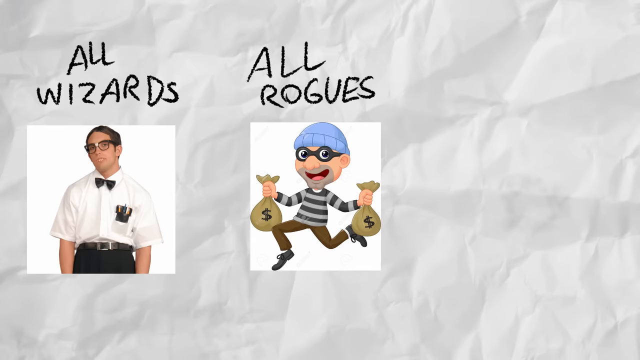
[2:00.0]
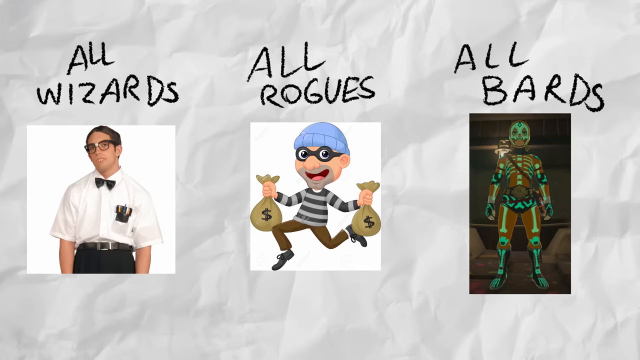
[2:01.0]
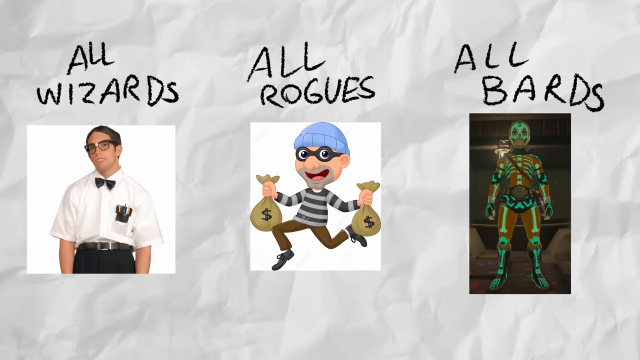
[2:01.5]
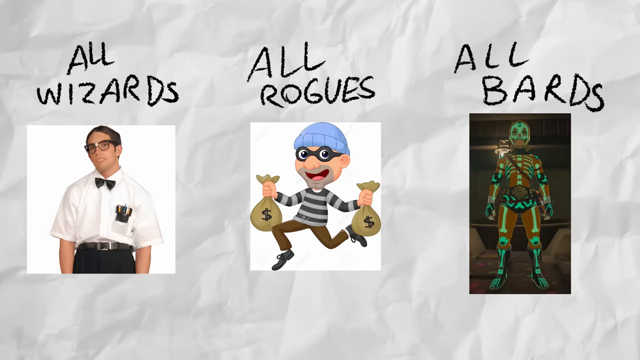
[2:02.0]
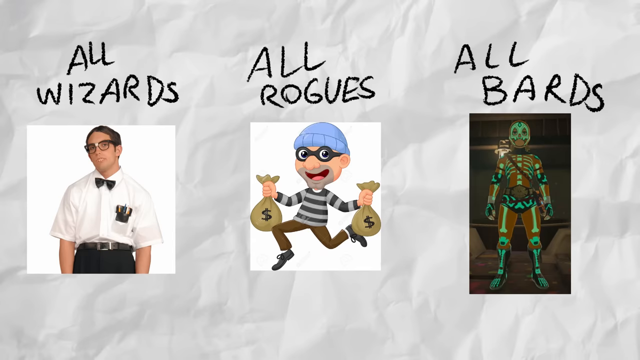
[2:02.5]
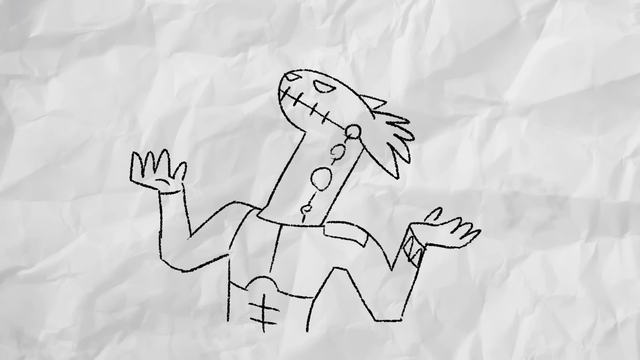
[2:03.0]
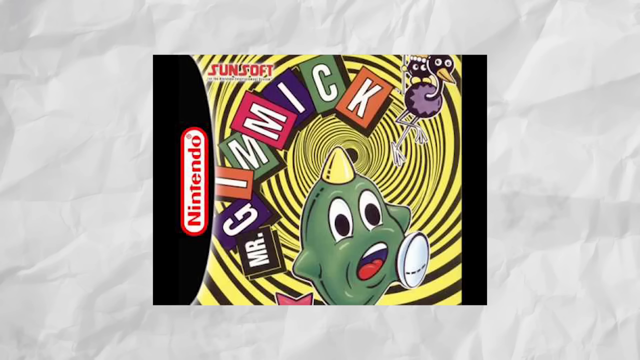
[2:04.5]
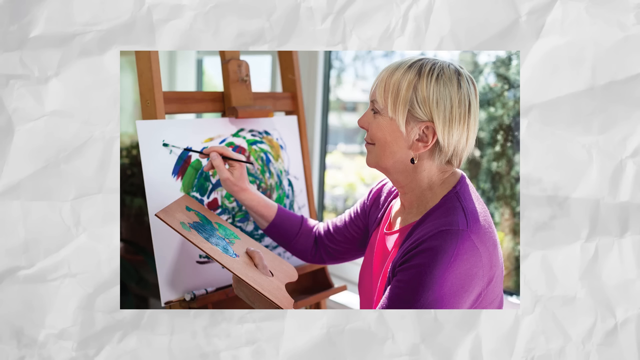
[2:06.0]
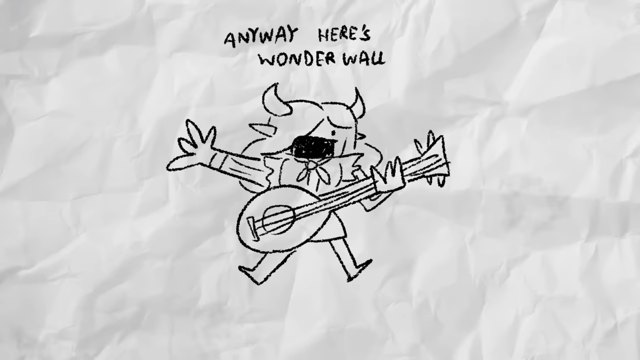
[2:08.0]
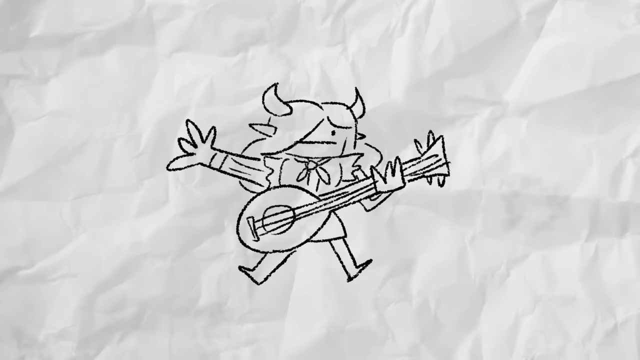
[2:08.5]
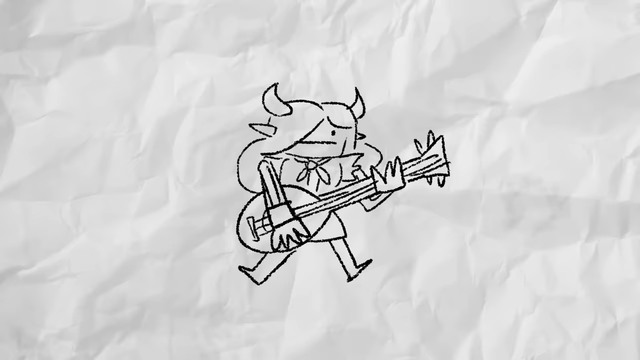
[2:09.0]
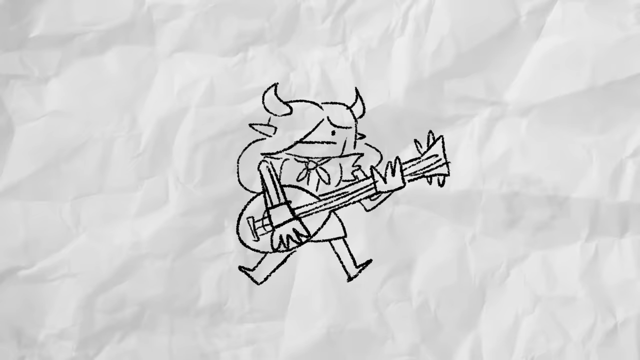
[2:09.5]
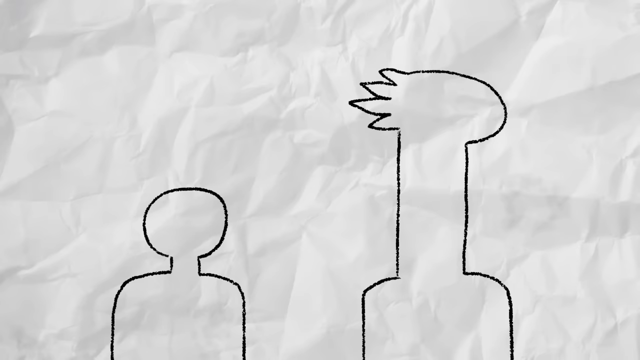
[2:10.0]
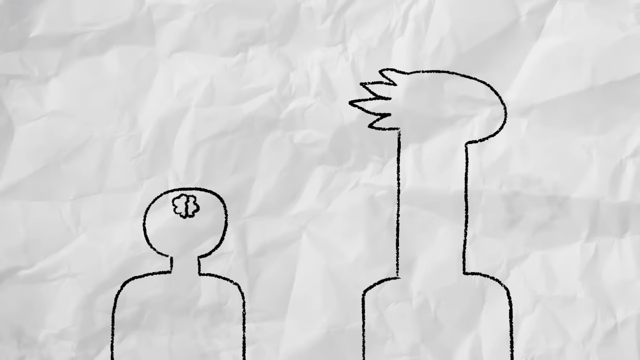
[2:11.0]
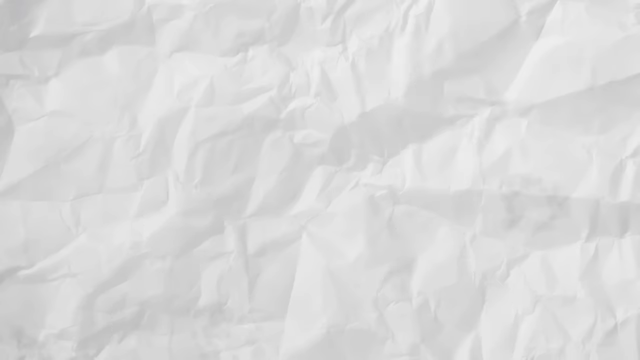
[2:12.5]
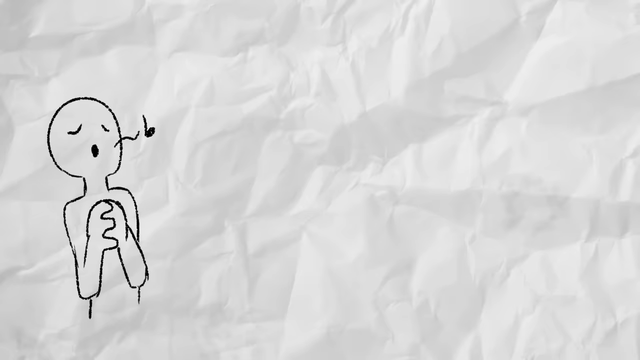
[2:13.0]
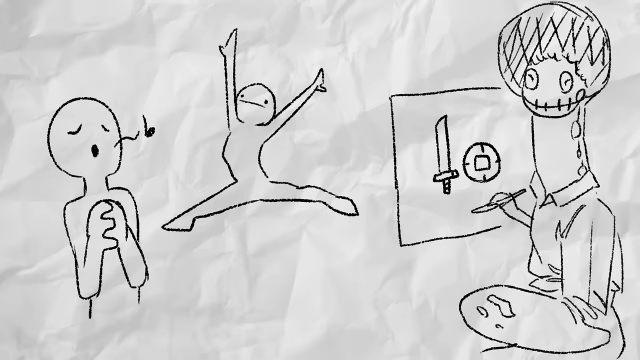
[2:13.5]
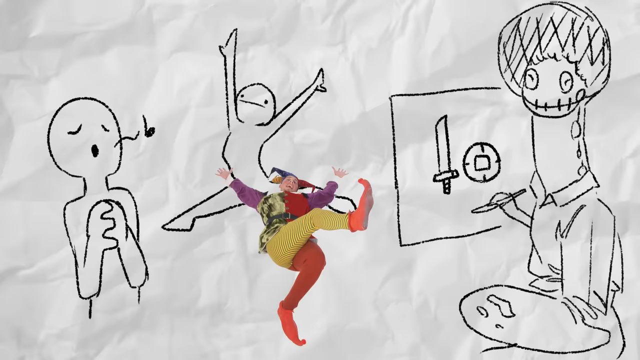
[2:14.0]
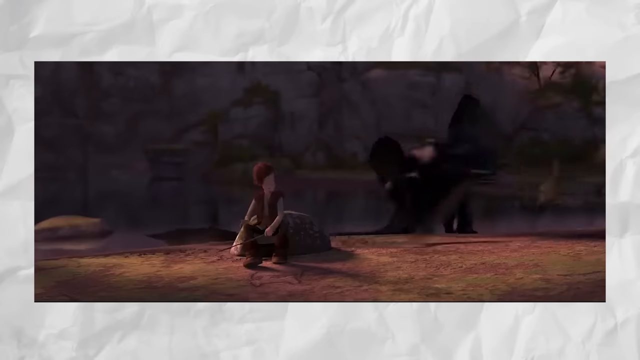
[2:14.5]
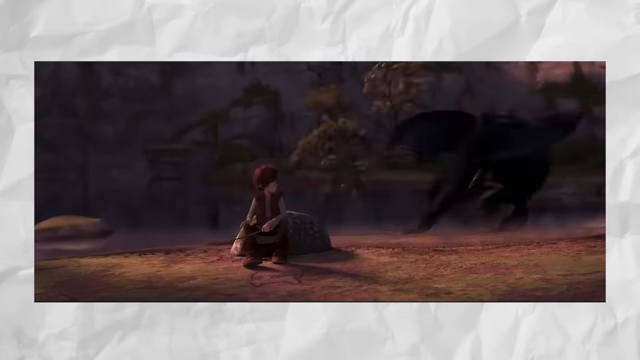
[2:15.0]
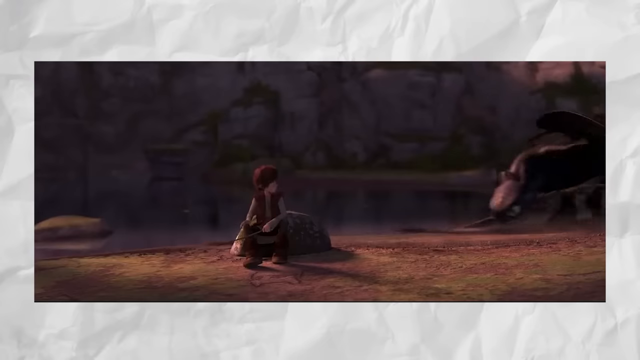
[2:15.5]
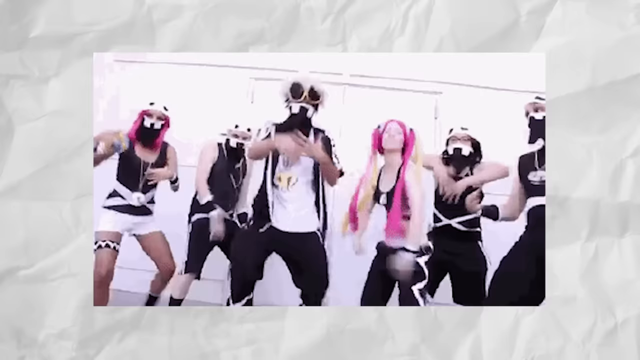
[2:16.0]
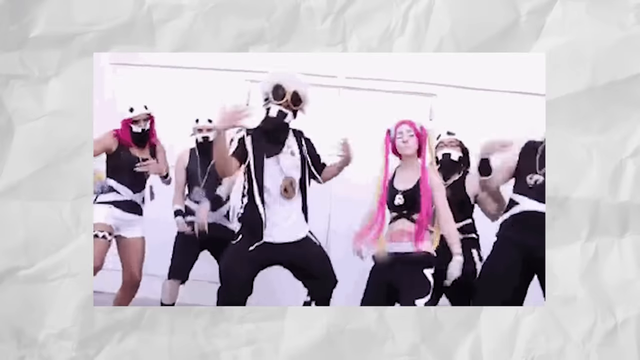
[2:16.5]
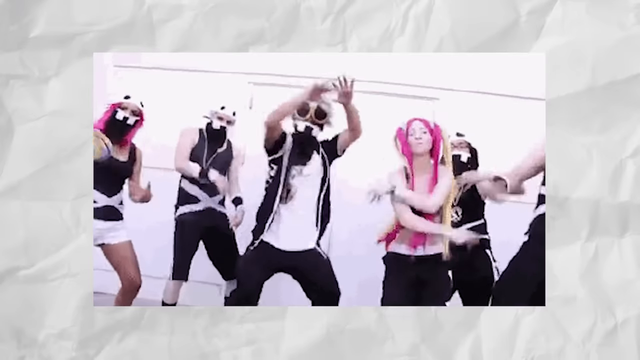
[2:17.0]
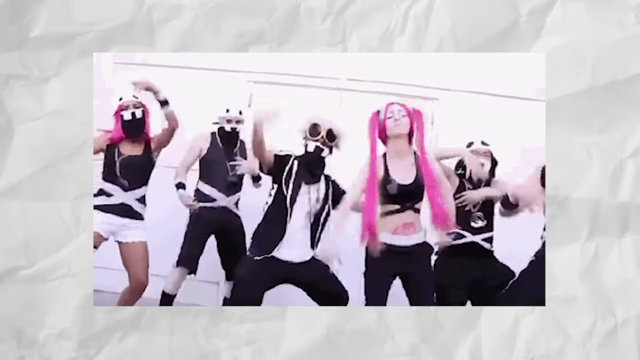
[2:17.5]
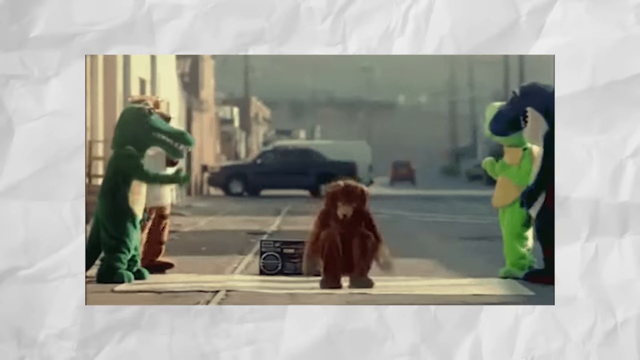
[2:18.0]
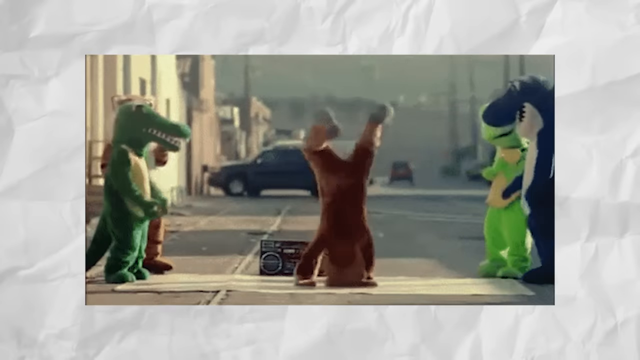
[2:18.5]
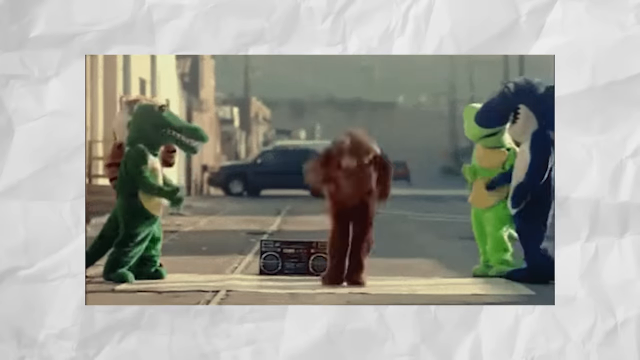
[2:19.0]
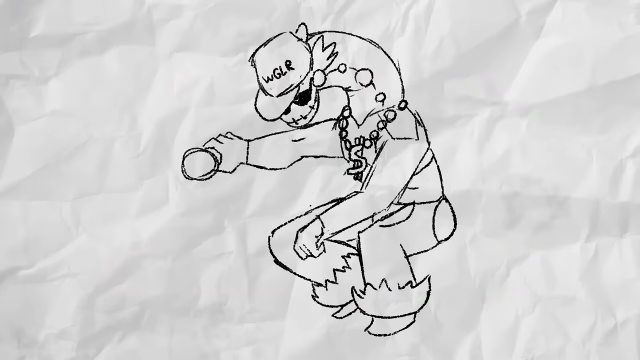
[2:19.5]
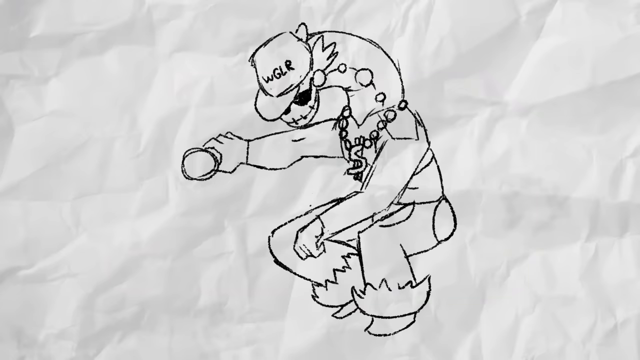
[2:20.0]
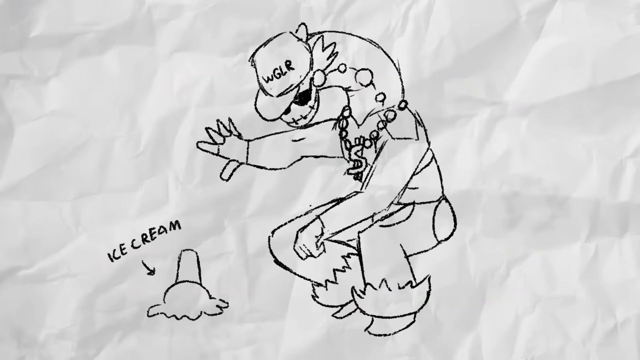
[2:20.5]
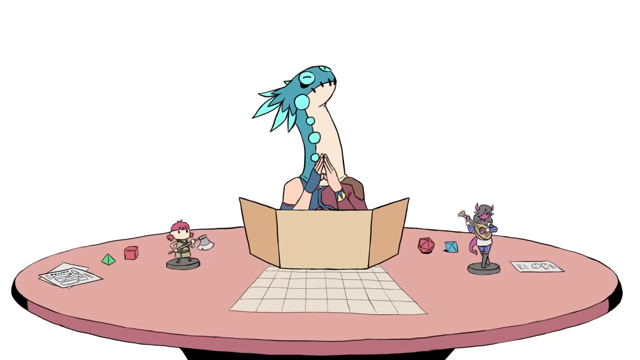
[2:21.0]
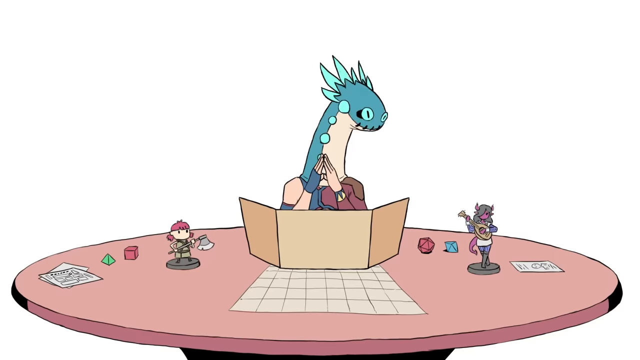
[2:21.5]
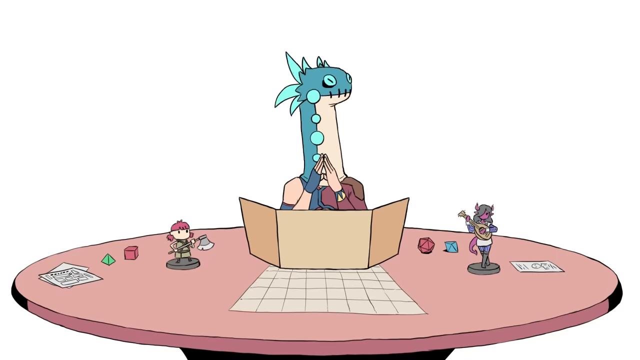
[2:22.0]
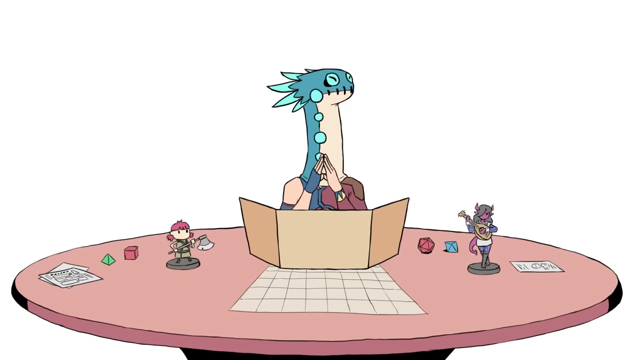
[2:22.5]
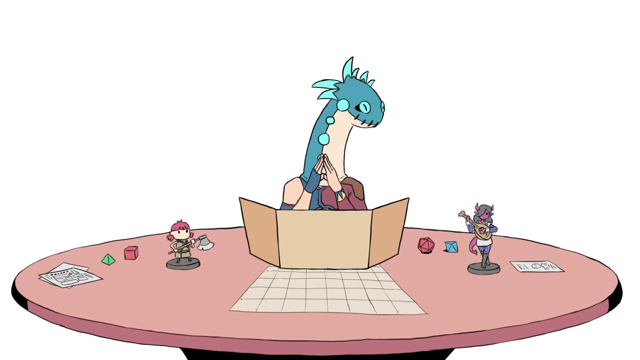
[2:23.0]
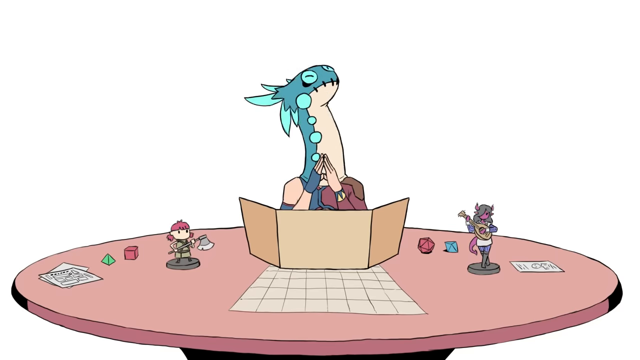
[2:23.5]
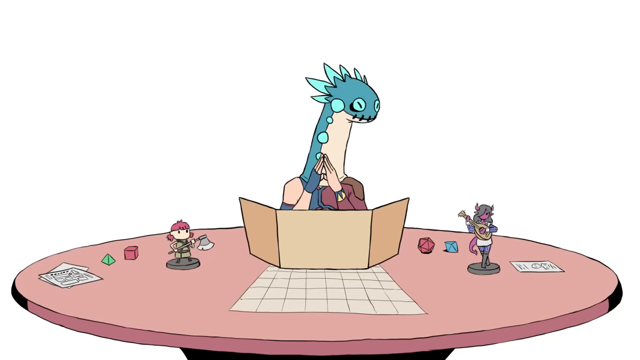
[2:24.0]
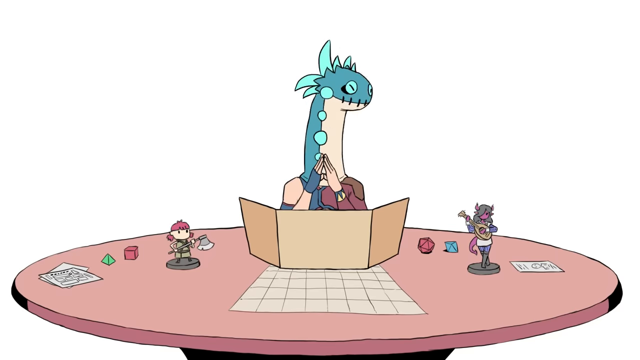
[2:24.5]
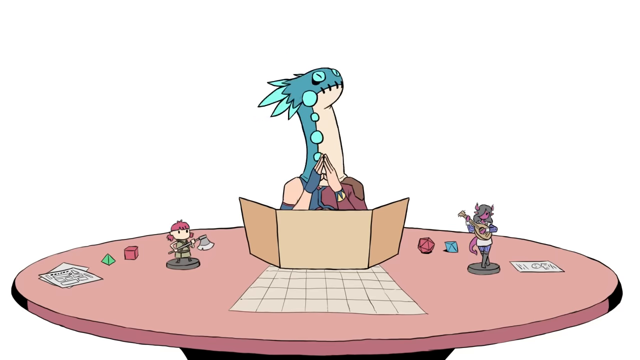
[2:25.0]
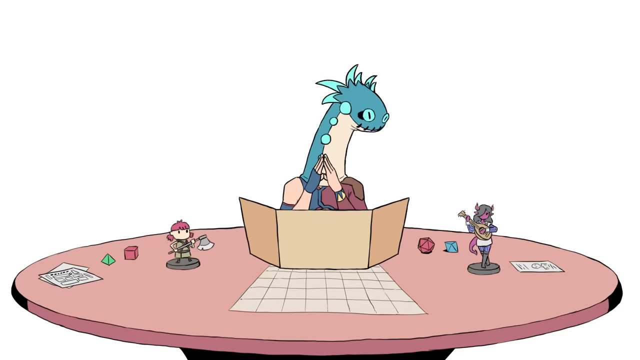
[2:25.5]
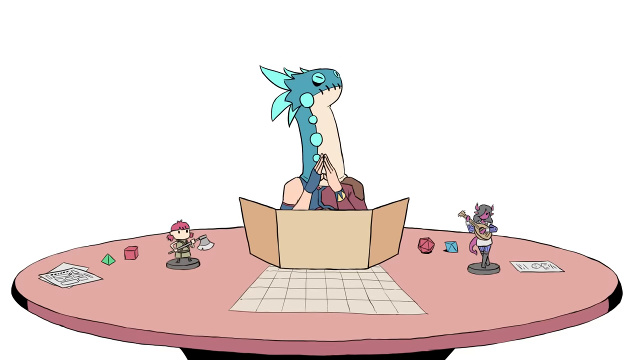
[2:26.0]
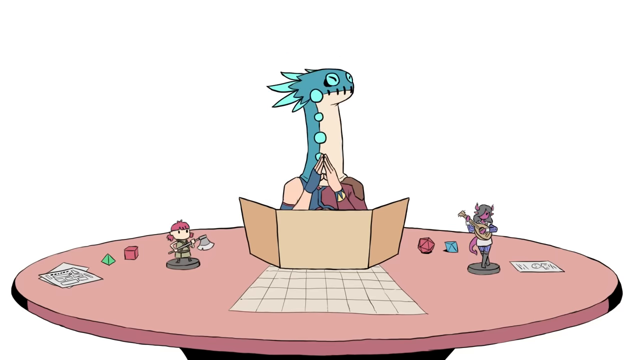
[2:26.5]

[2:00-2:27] Over the crumpled paper, an image shows a nerdy white guy with a bow tie, a white shirt and glasses, with black chalkboard-style text above him reading "all wizards". To the right, another image shows a burglar in a blue hat, a gray and black striped shirt and brown pants, holding two money bags, with text above him reading "all rogues". To the right of that, another image appears to show a person in a skeleton costume, with text above reading "All Bards". Next, a drawn figure that looks like an iguana mixed with a human has both arms up in the air as if confused. Then an image shows the cover of a Nintendo video game called Gimmick, with a green monster at the bottom and a purple ostrich in the upper right corner. Next, an image shows a white woman in a purple cardigan and pink shirt painting on a canvas, holding up a brown palette with multiple colors of paint; the canvas also has multiple colors of paint. Then a drawn girl with devil horns holds a ukulele in one hand with her other hand out at her side, under text reading "anyway, here's Wonderwall", and the animation shows her playing the guitar with her outstretched hand. Next, a drawn figure with just a head and body is on the left, and the drawn outline of an iguana mixed with a person is on the right; a brain is drawn inside the head of the figure on the left, and a larger brain inside the iguana figure on the right. The scene briefly returns to the plain white crumpled paper background, and then a figure is drawn on the left with his hands clasped and his mouth in an O shape with a music note coming out. To his right, a similar drawn figure does ballet with legs and arms stretched to the side, and to the right of the ballerina, the iguana-like figure paints a sword and shield on white paper, holding a paint palette in one hand and a paintbrush in the other. Next comes a quick scene from the movie How to Train Your Dragon. Then an image shows several people dancing in black and white outfits, two of them with long pink hair. Next, several people in animal costumes dance on the street; in the middle, a person in a bear costume does a backflip, with a boombox on the ground. Then the half-iguana, half-human figure wears a chain with a dollar sign and a hat reading "WGLR" while holding an ice cream; he drops it, it splatters on the ground, and text above it reads "ice cream". Finally, in a different style, an iguana sits in the middle of a pink round table covered in Dungeons and Dragons accessories, including some dice, some paper, two figurines and a brown portfolio laid open in front of him, and he nods his head back and forth.